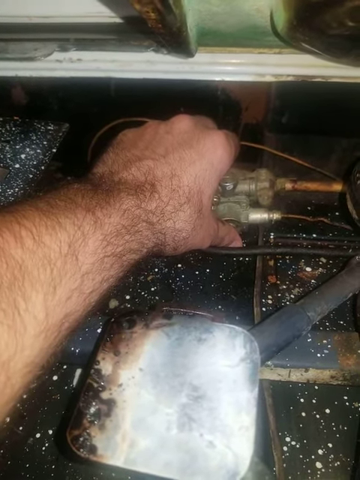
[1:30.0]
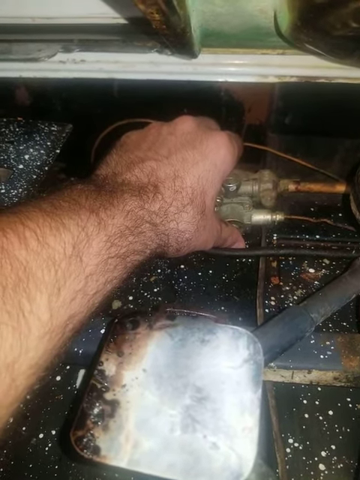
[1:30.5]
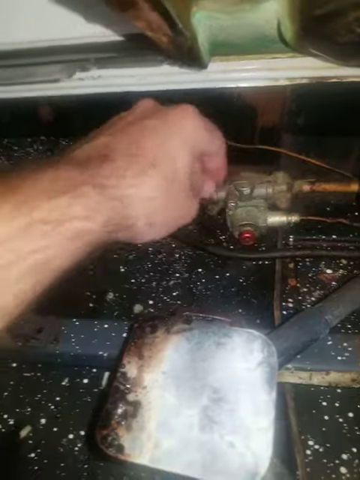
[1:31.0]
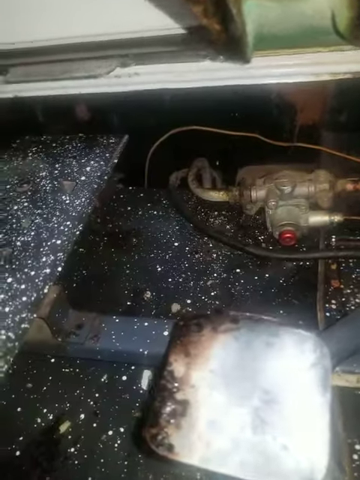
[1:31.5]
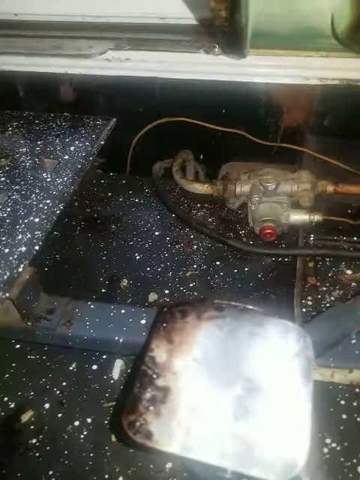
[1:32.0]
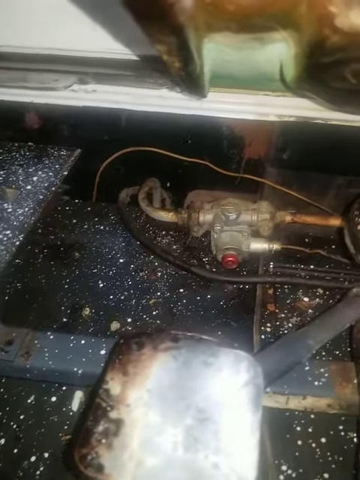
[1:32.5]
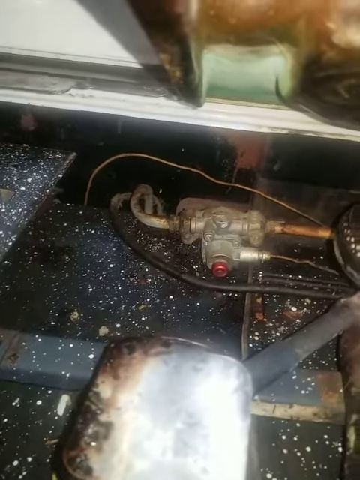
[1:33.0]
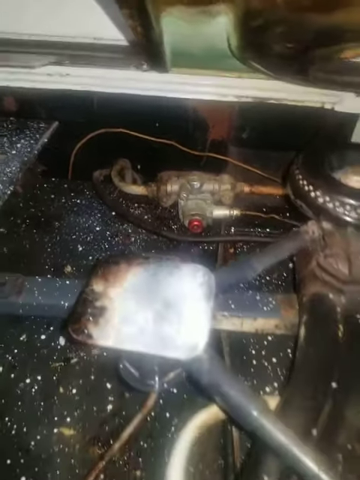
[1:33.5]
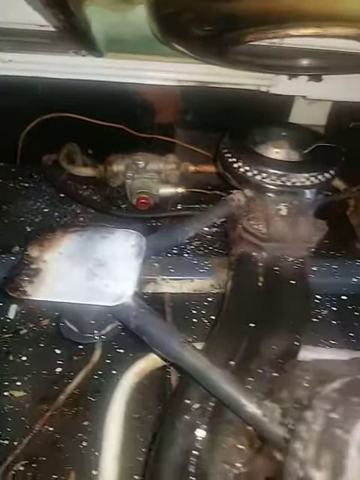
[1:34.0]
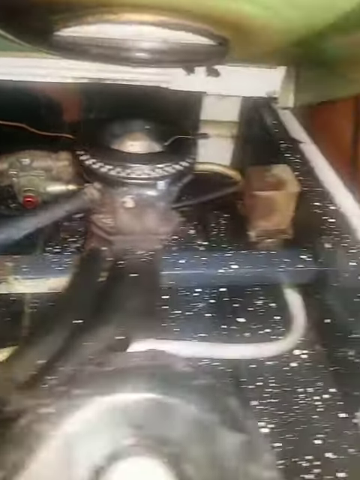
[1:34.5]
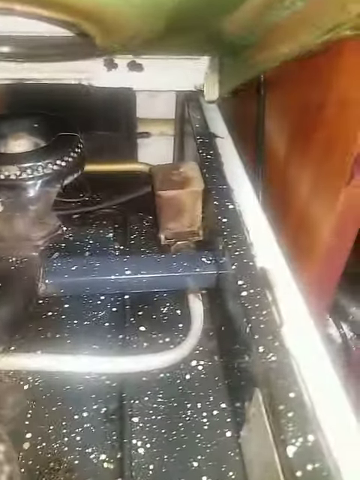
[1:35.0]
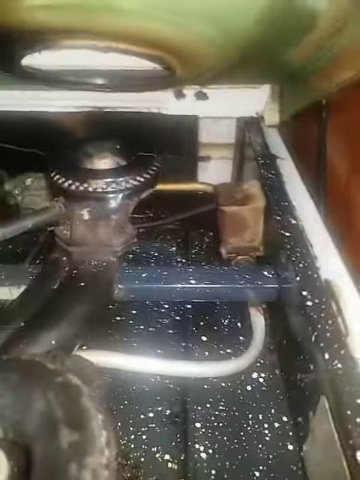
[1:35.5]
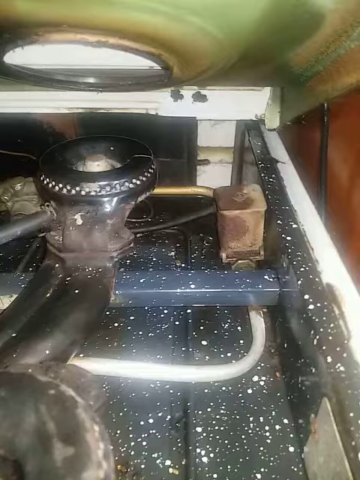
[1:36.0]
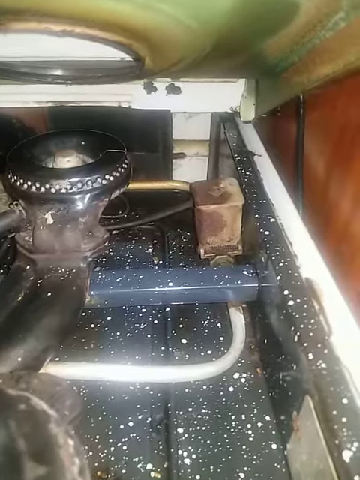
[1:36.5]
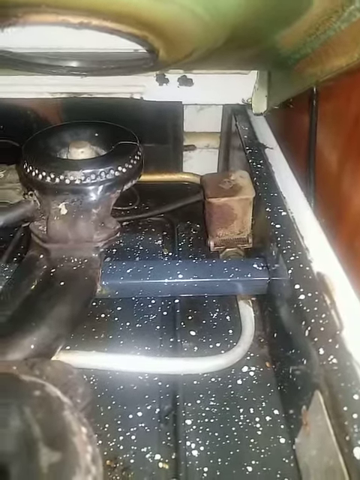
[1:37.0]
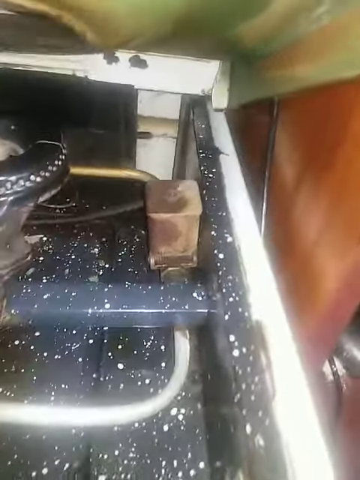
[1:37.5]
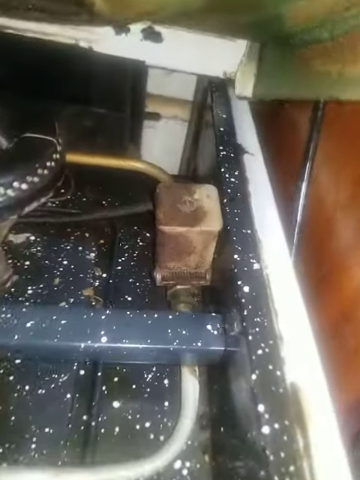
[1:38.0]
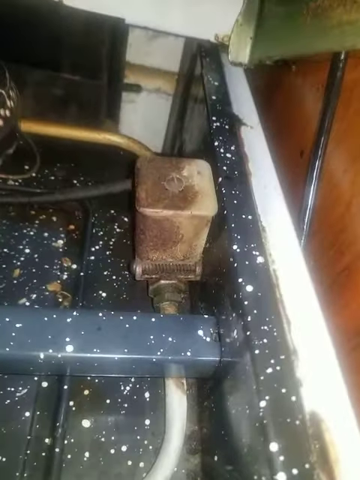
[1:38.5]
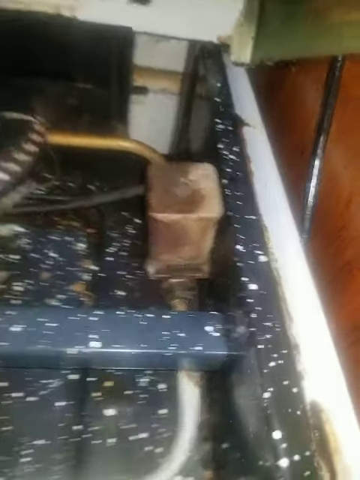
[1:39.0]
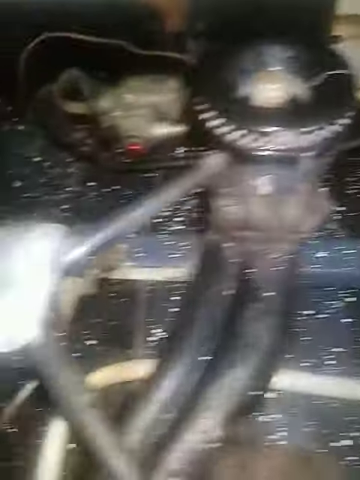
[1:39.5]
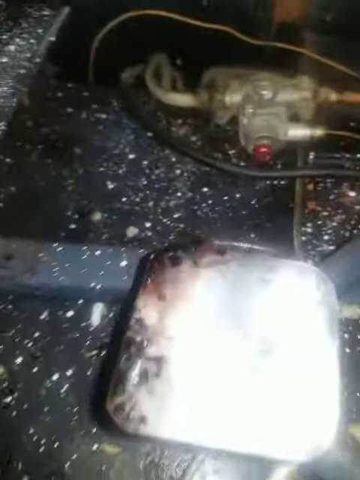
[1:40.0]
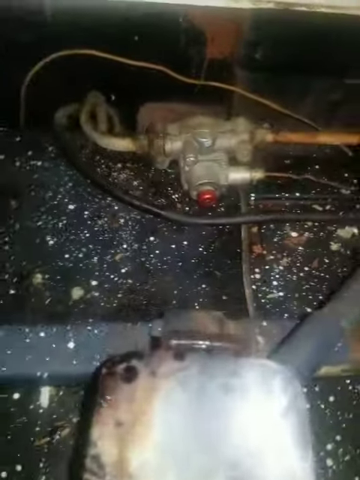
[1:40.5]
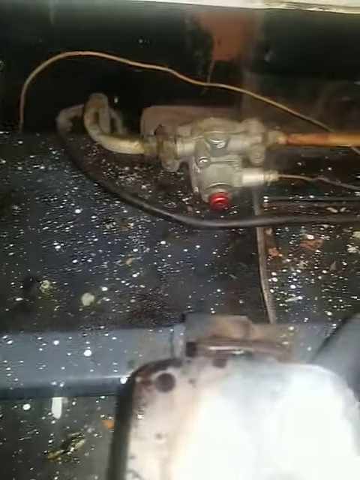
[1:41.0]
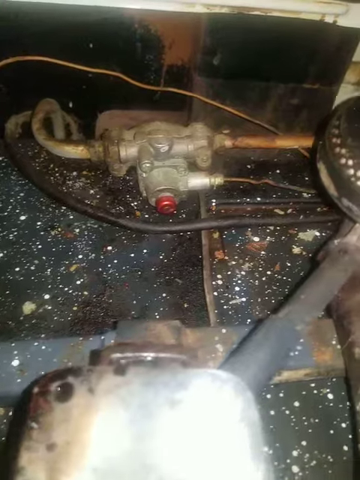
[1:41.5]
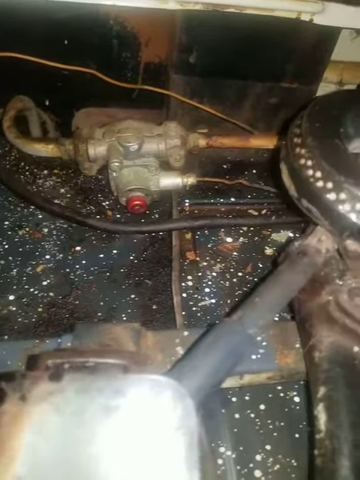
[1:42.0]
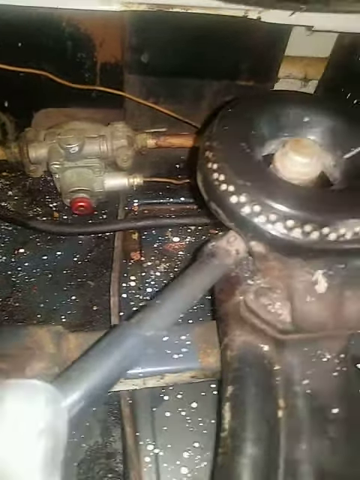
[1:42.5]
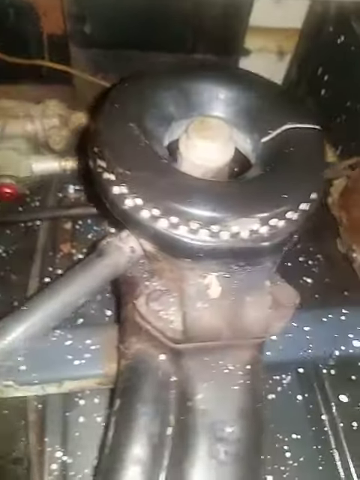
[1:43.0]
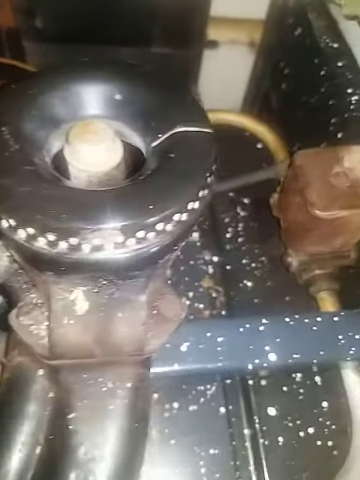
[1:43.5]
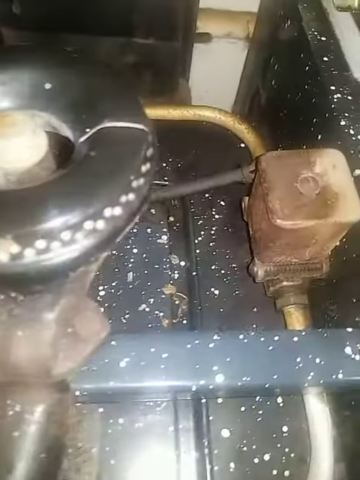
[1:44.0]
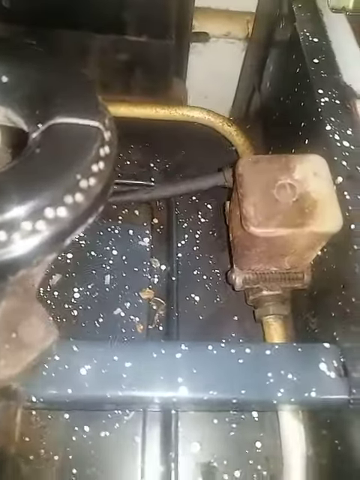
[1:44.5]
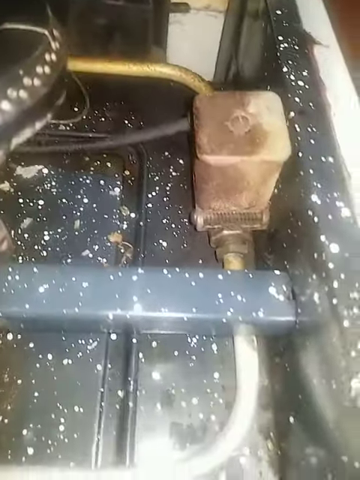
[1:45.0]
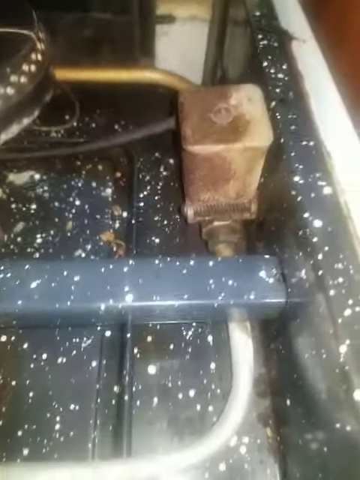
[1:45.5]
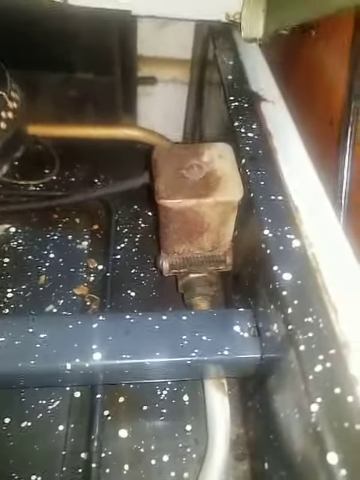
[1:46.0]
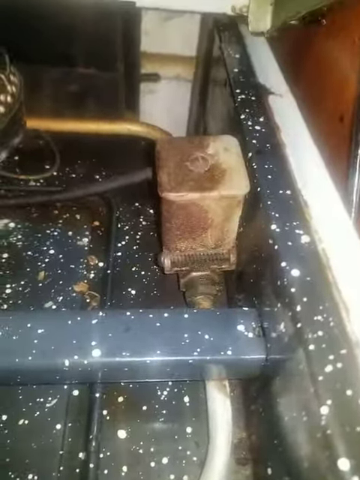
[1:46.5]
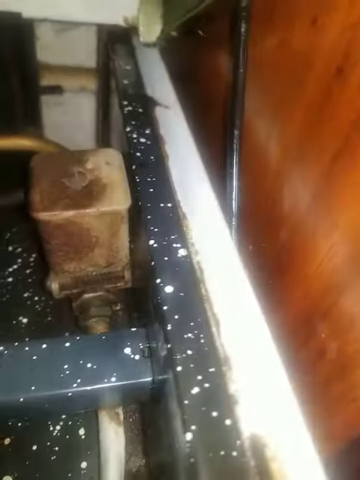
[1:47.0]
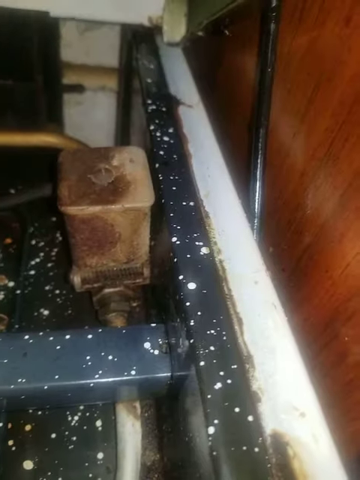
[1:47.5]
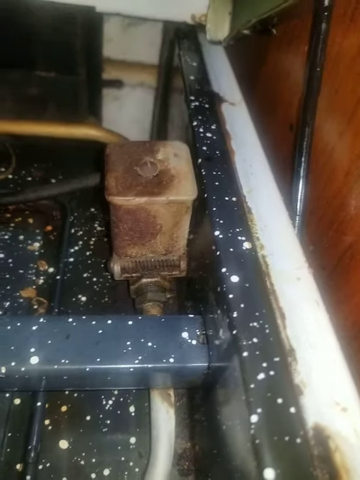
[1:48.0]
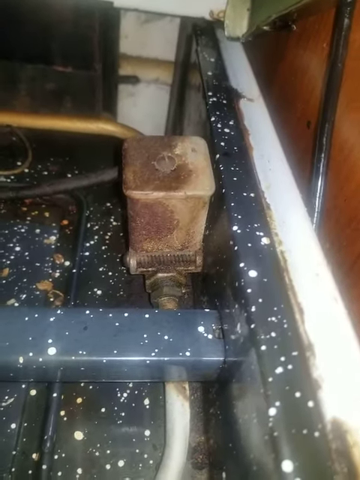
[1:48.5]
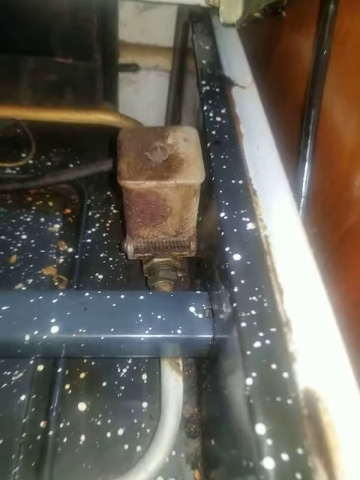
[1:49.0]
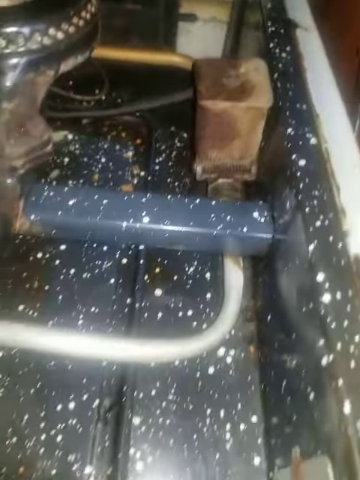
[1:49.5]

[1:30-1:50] The white man with the hairy arm is still pushing the red button on the metal device, which has some cables coming out of it. He then stops pushing, and the camera moves out of the area of the disassembled stoves and to the right, to a cube-like piece of the stoves that is quite dirty and rusty, yellowish almost brown, with pipes going in and out of it. He looks at that piece, then looks at the stove again and continues pointing the camera in every direction within the black walls painted with white dots of the disassembled stove.